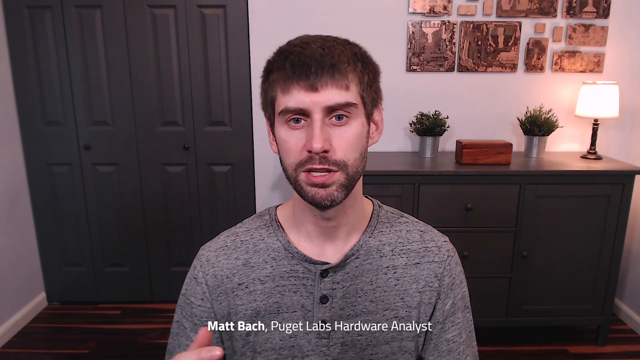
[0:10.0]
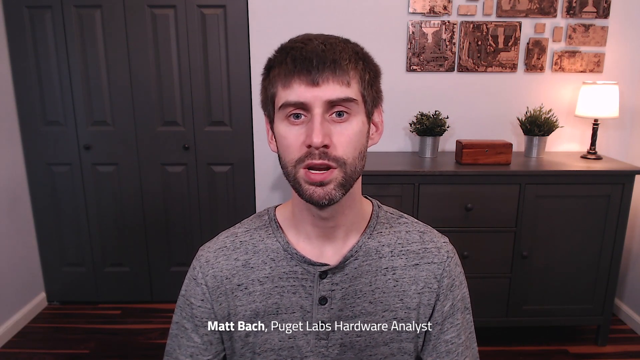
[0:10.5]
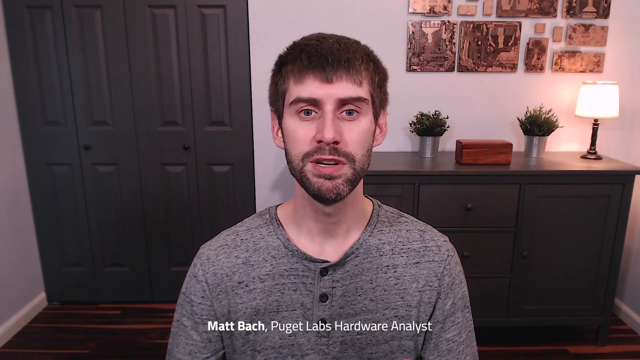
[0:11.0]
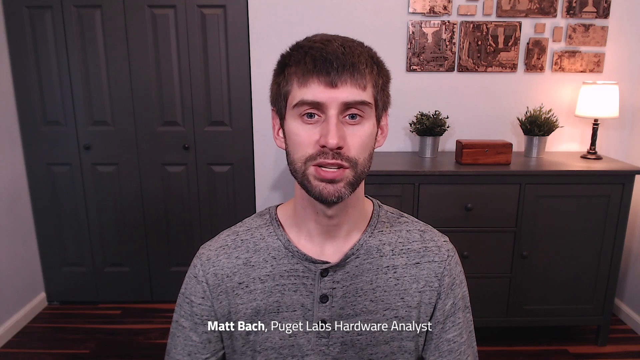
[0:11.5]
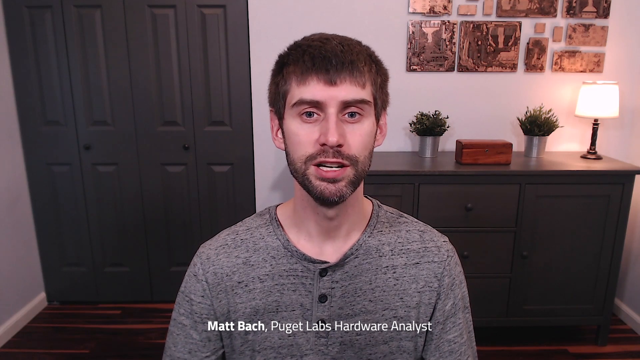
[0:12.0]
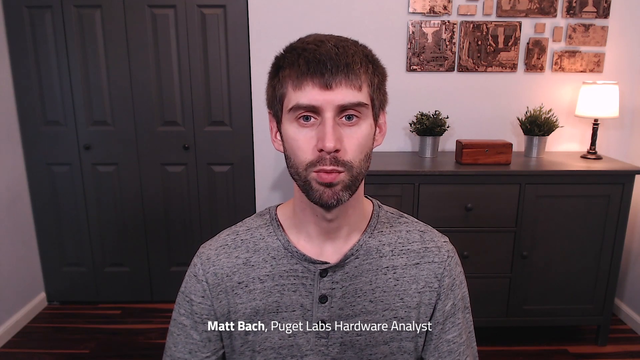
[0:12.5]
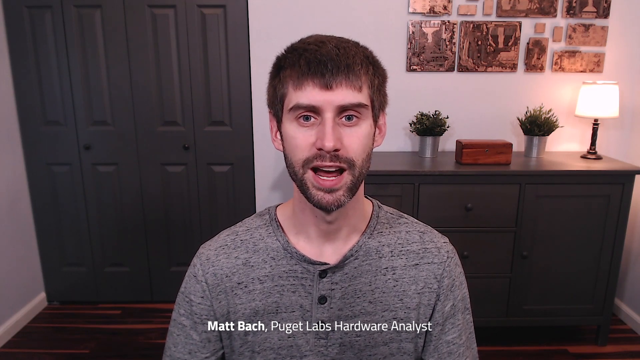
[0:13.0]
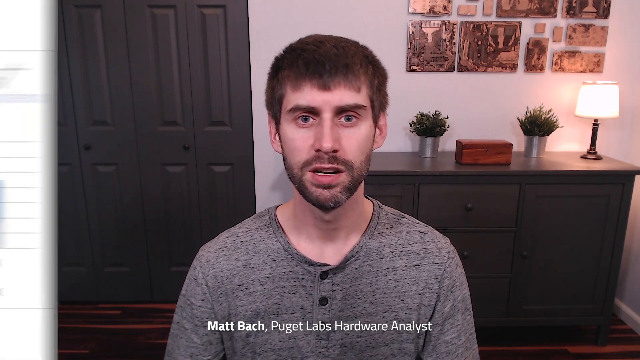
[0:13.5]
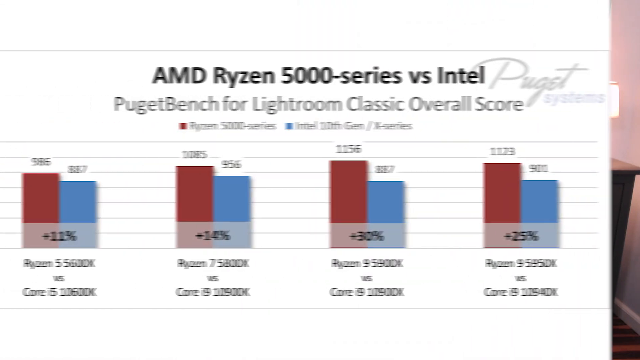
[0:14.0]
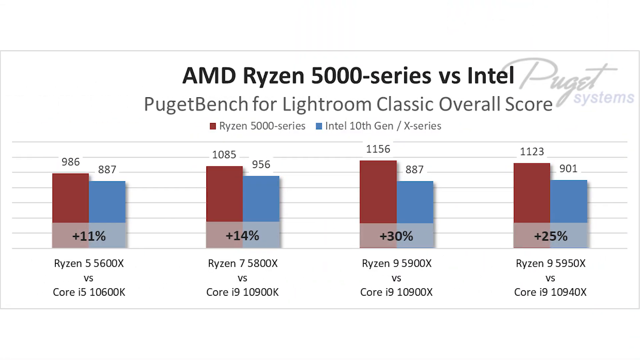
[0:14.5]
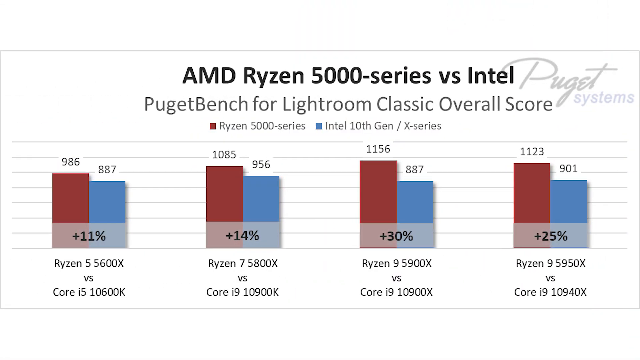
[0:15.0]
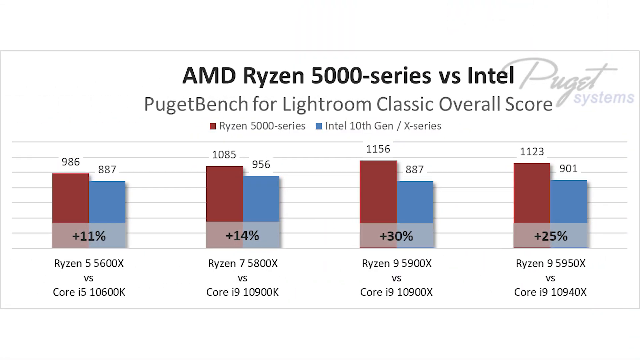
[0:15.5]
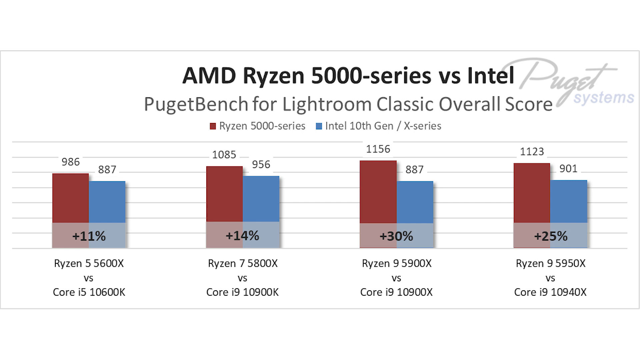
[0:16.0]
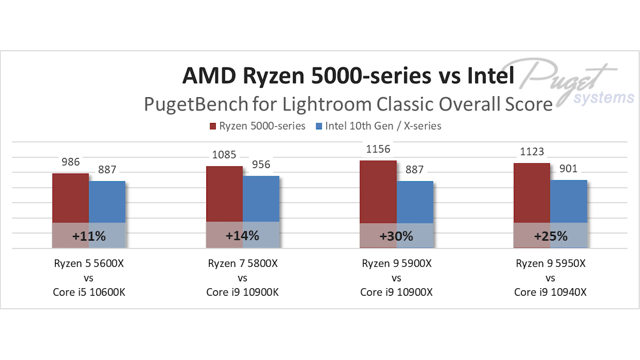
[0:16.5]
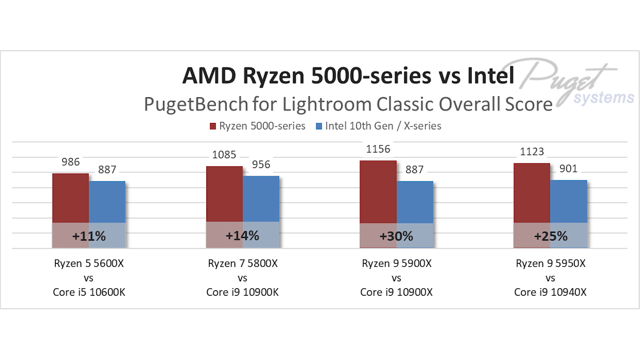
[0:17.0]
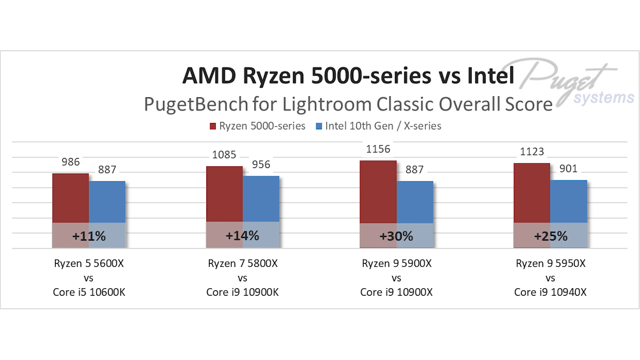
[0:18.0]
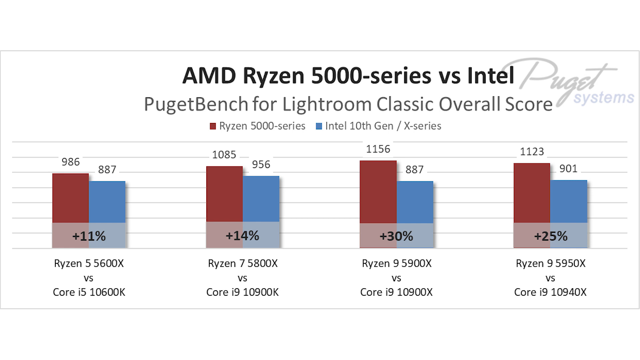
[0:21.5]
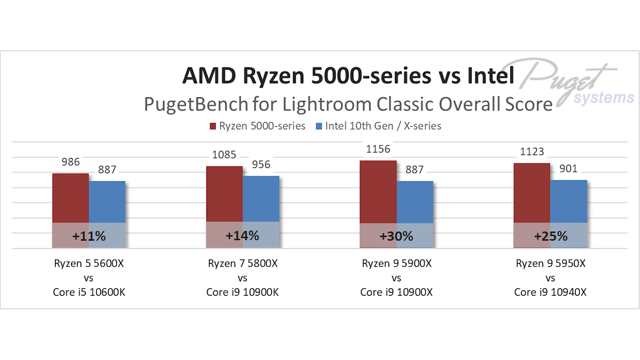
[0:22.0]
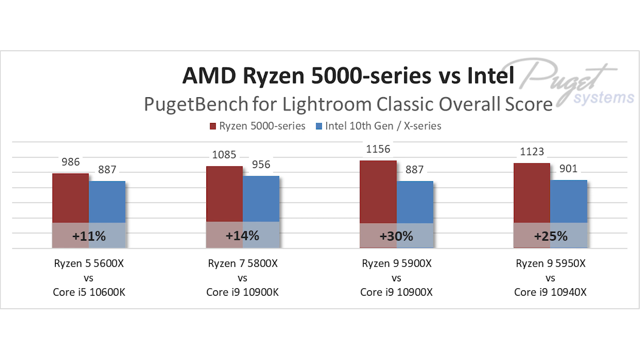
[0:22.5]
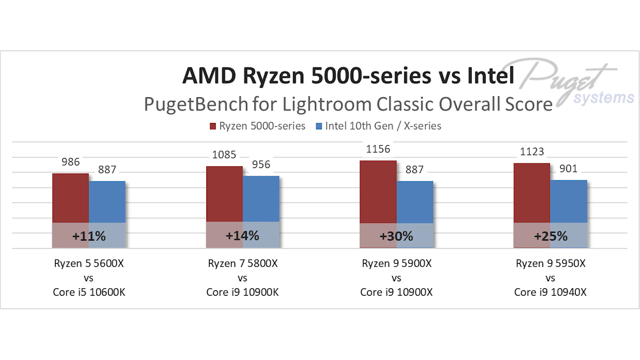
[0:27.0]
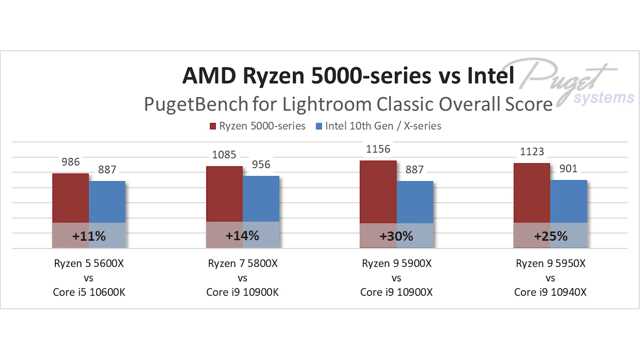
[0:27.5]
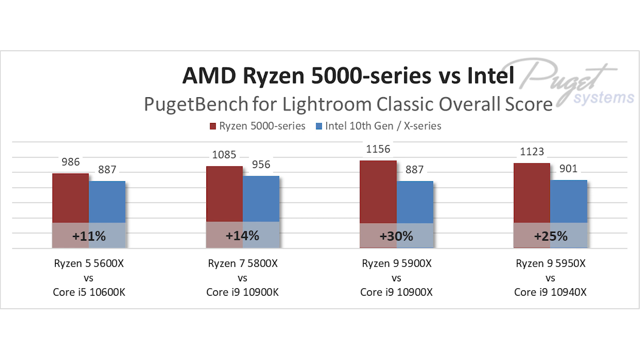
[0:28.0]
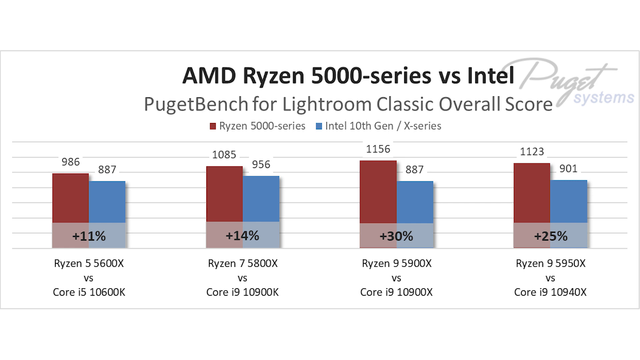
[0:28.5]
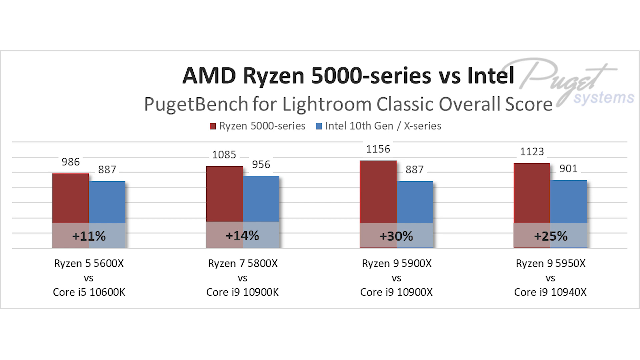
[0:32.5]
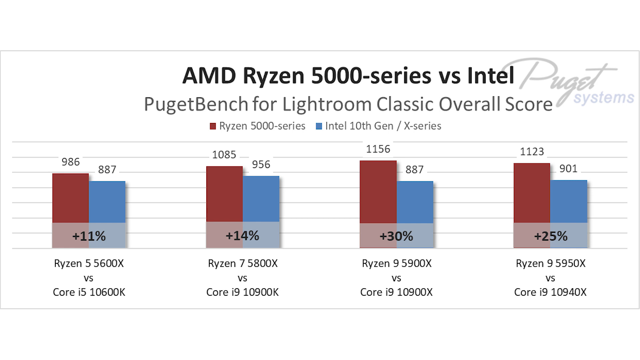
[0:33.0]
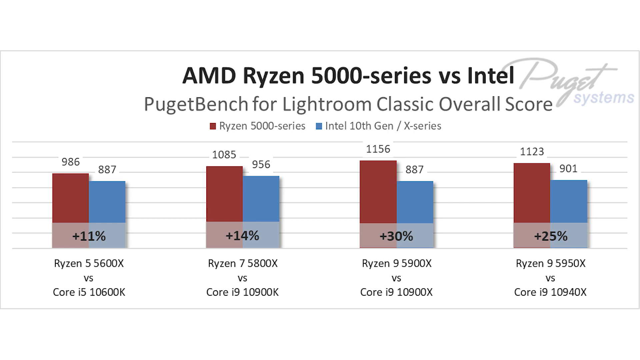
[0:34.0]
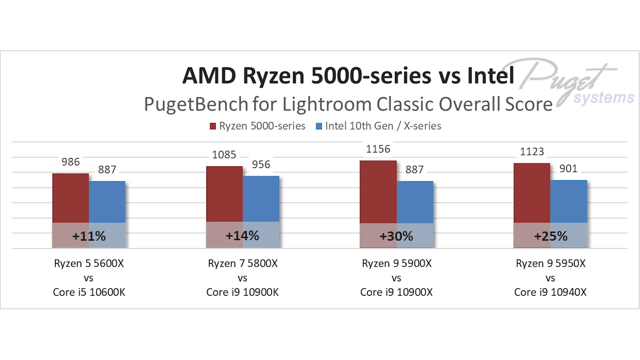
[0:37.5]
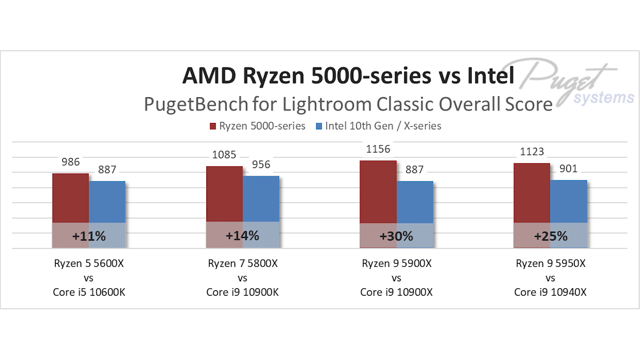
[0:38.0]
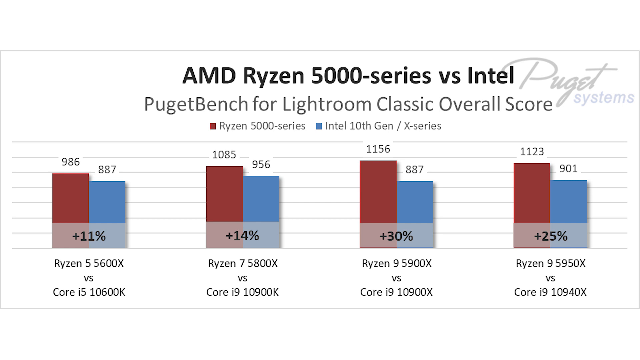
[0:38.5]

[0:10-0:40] The focus shifts to a comparison between Intel and AMD, showing the overall classic score for Lightroom. Between the two, AMD seems to be the leading one. A slide is shown with a background that represents the differences between Intel and AMD; only these two are compared. The setting is still the study room at home.